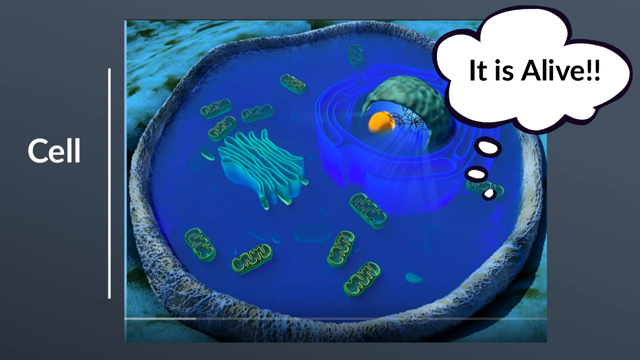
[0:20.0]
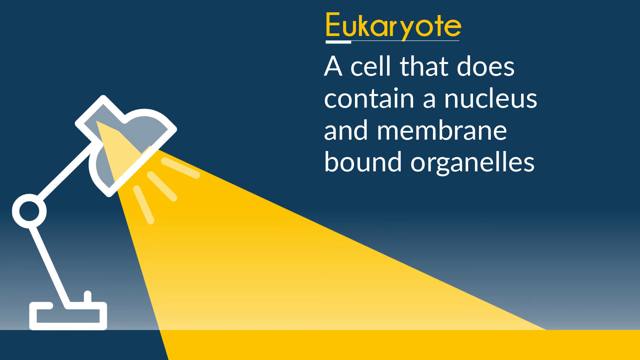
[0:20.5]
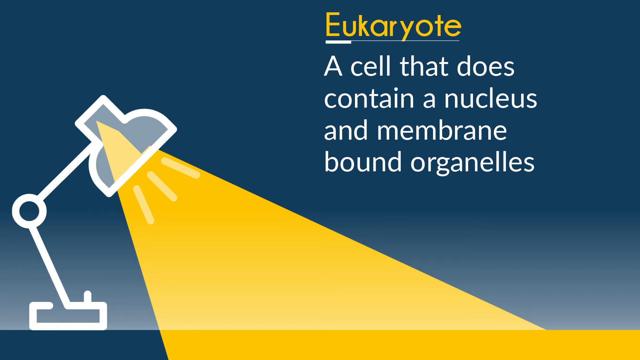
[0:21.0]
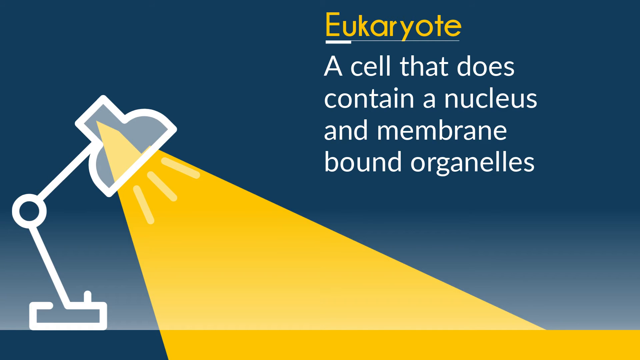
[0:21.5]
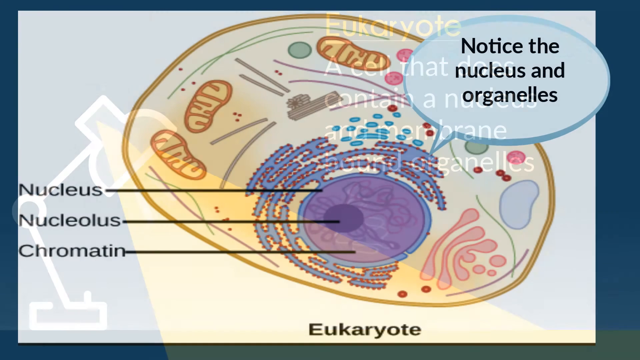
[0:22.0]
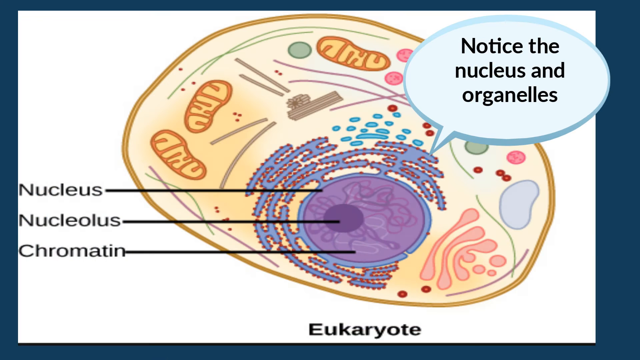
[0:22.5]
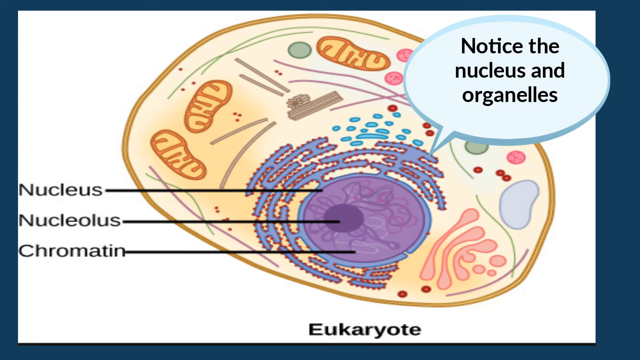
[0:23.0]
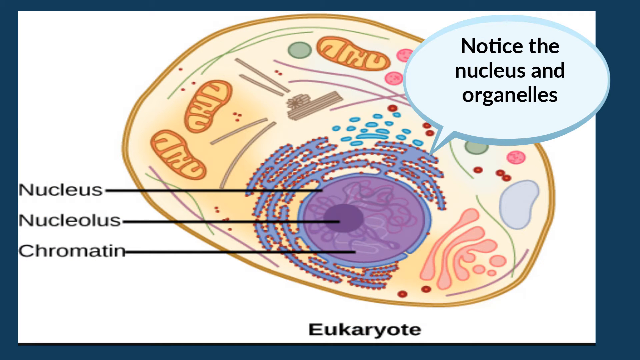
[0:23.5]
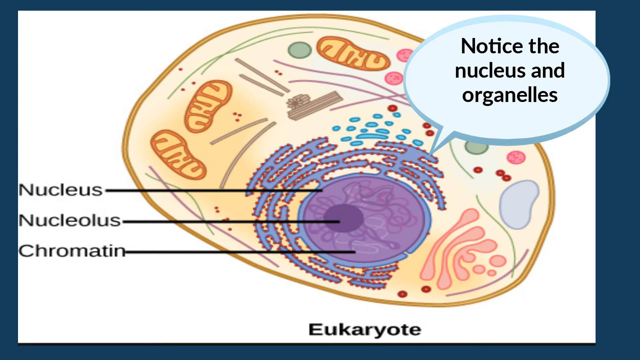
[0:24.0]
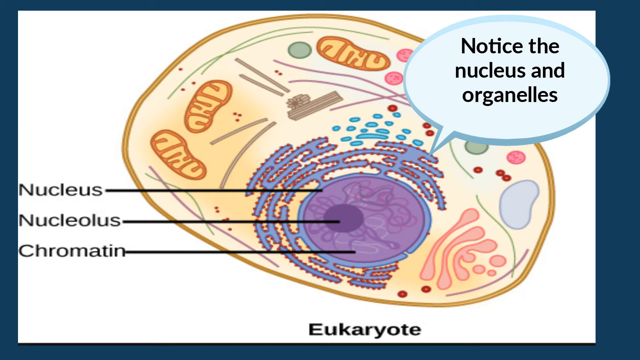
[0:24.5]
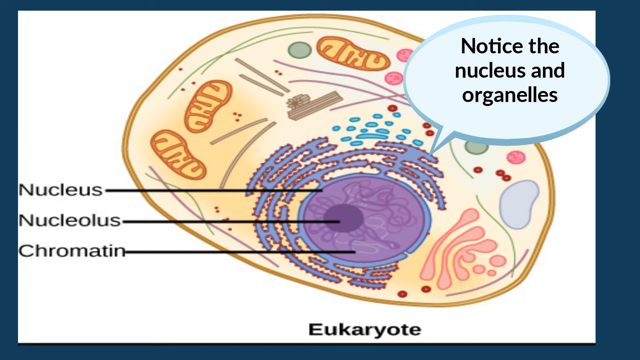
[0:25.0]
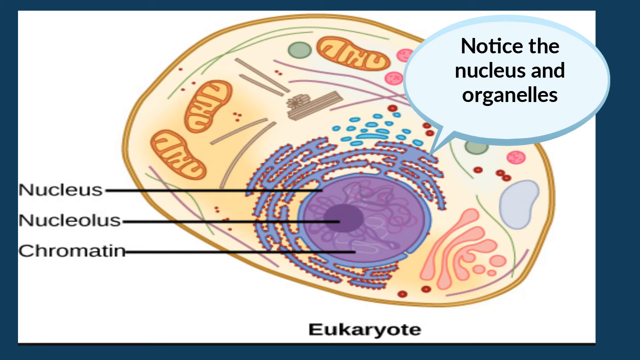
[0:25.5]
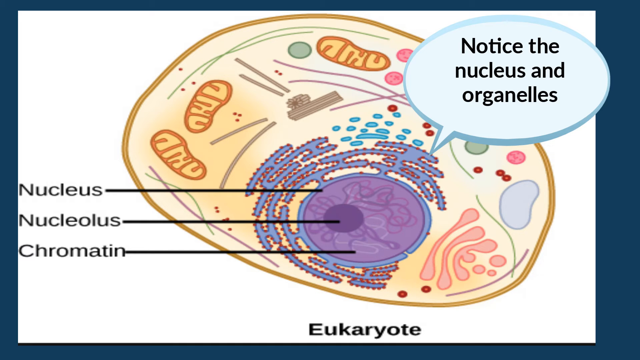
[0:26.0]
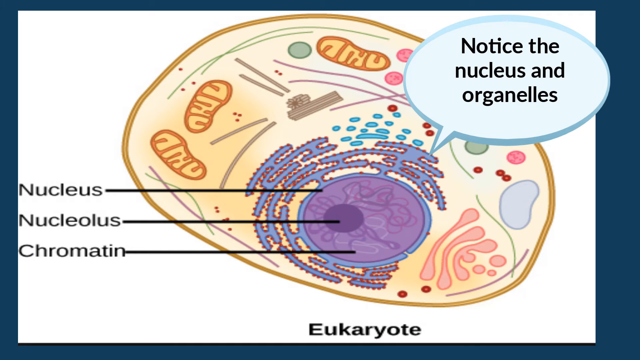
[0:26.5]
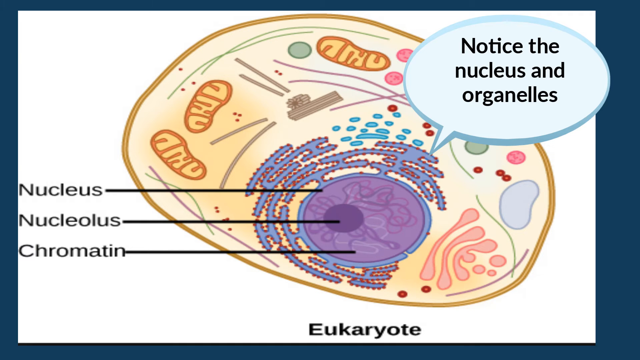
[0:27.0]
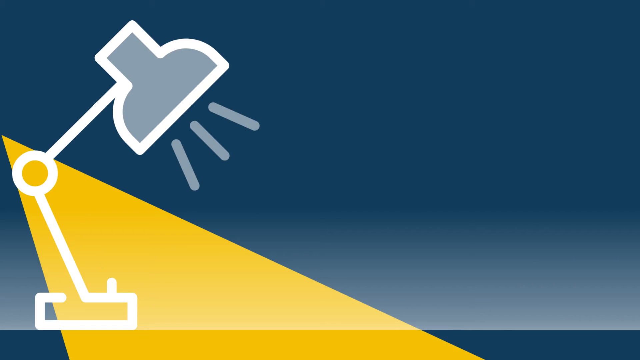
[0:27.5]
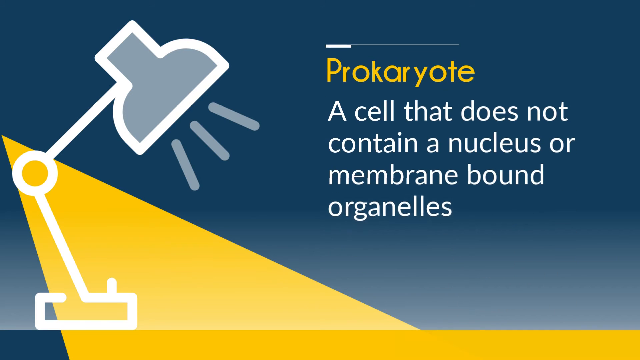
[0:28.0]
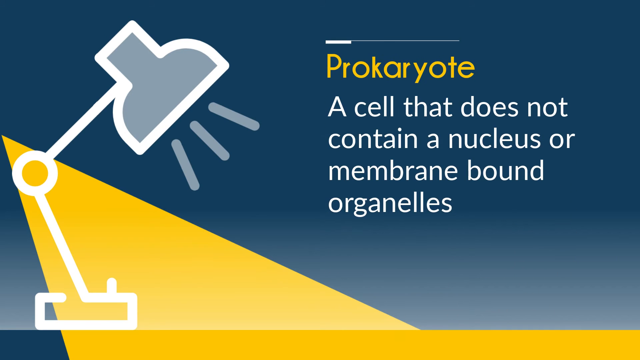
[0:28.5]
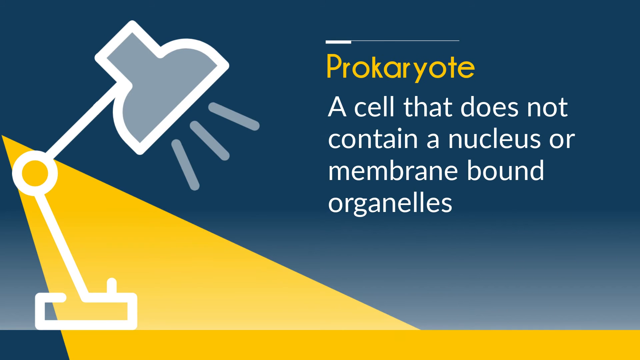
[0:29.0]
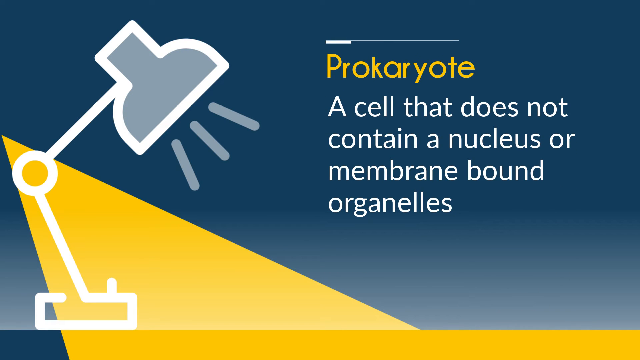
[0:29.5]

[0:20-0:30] The same cell diagram appears with the speech bubble that says "it is alive," and the word "cell" is on the left. The video then moves on to eukaryotes, with a definition that reads "a cell that does not contain the nucleus and membrane-bound organelles." A diagram shows the whole organism, the nucleus, the nucleolus and the chromatin, and a speech bubble at the top right says "notice the nucleus and organelles."